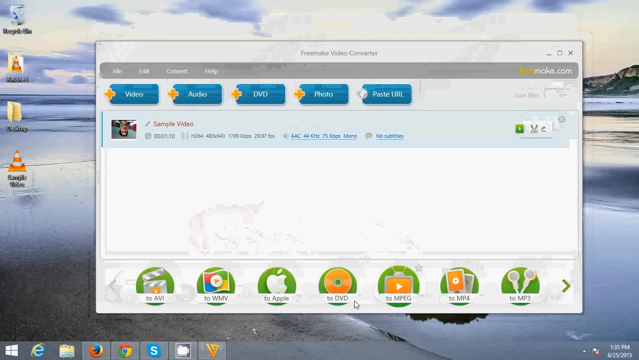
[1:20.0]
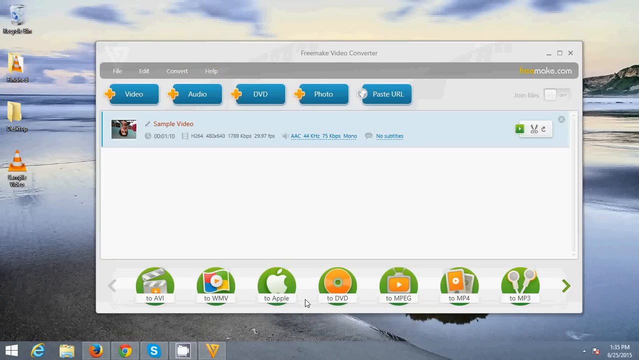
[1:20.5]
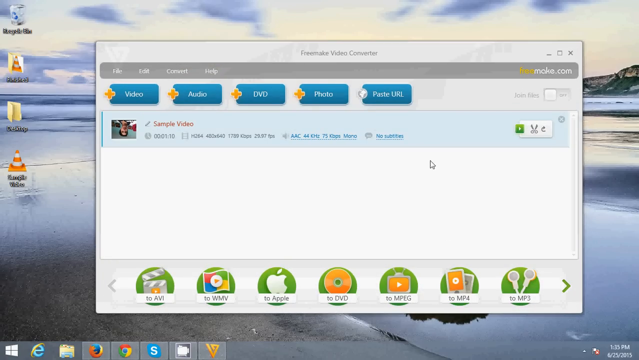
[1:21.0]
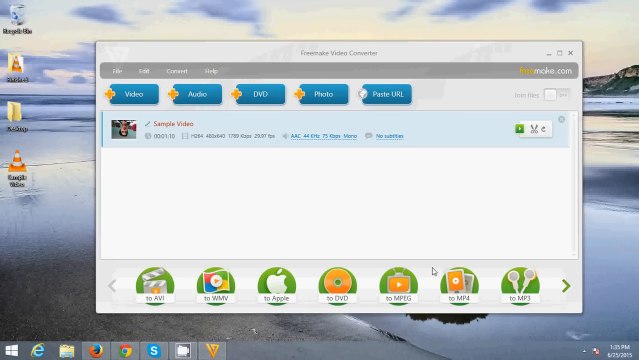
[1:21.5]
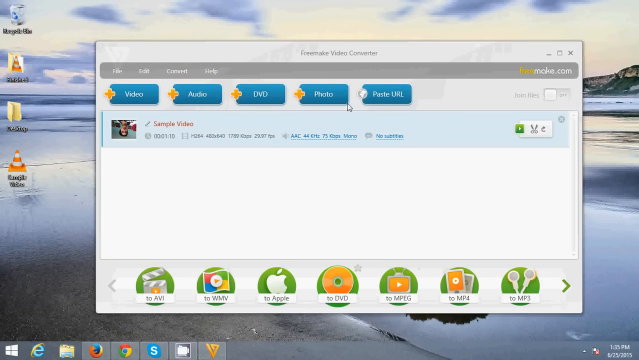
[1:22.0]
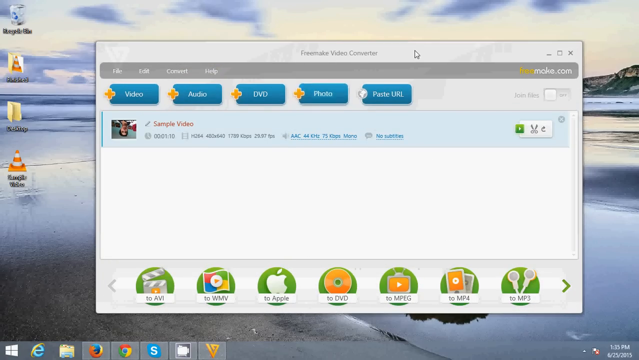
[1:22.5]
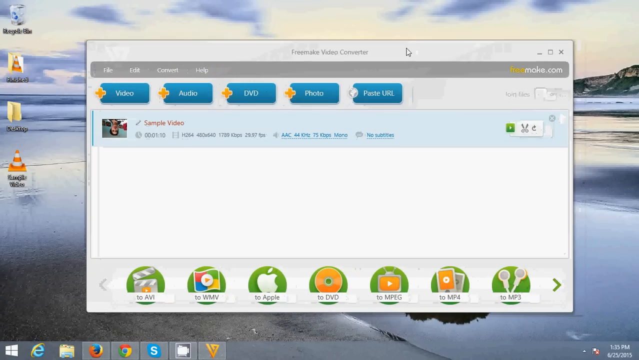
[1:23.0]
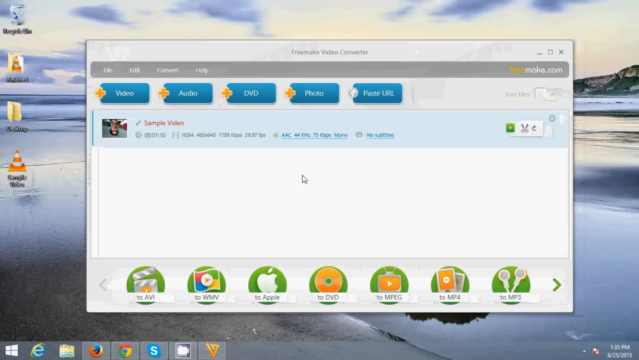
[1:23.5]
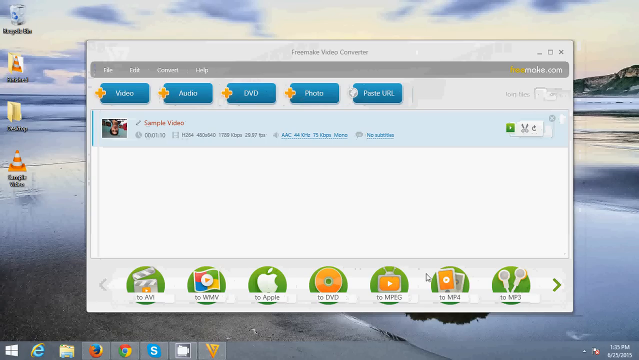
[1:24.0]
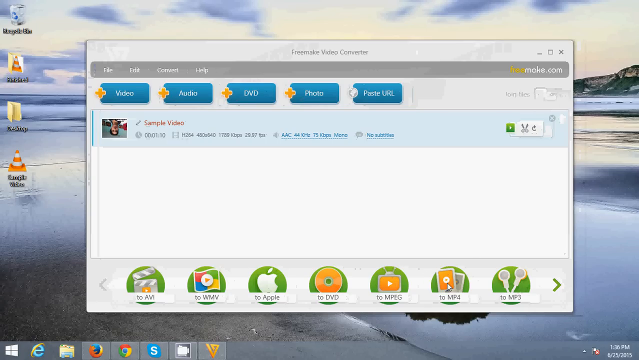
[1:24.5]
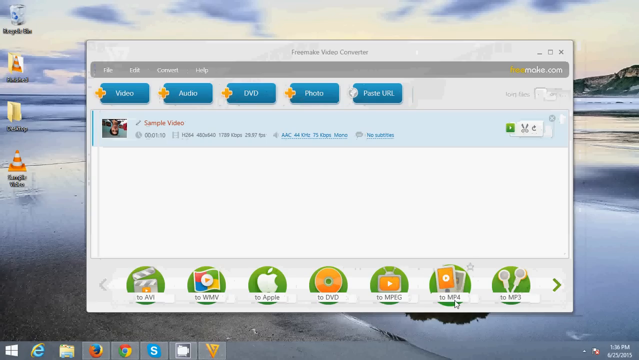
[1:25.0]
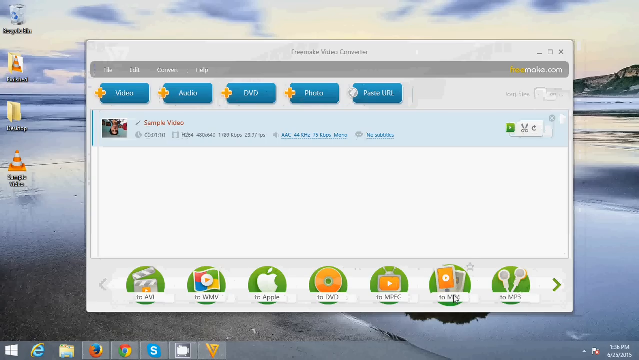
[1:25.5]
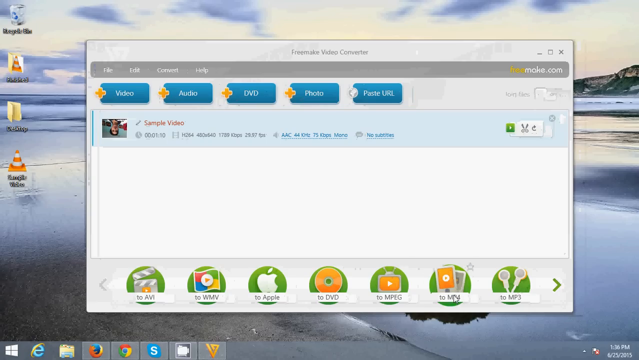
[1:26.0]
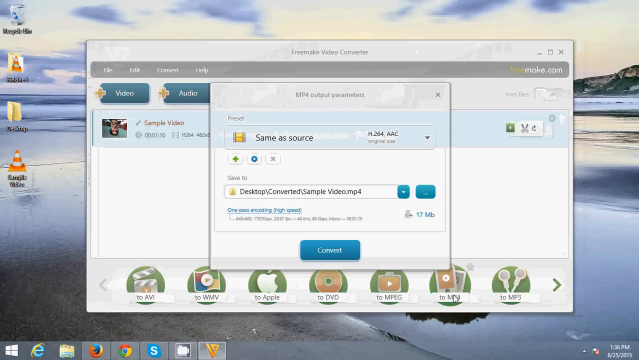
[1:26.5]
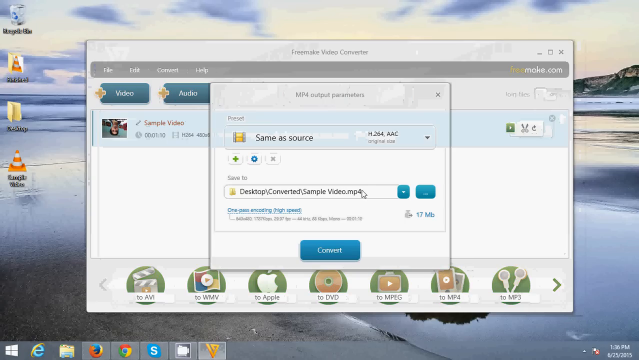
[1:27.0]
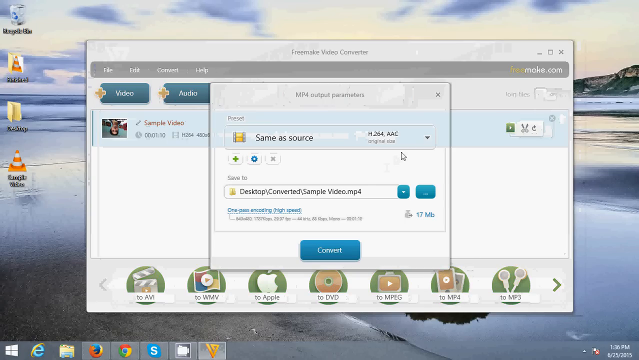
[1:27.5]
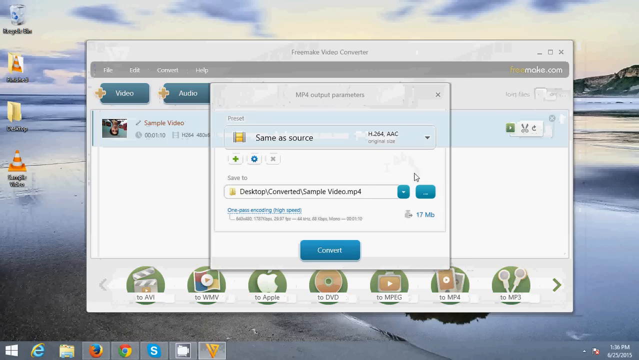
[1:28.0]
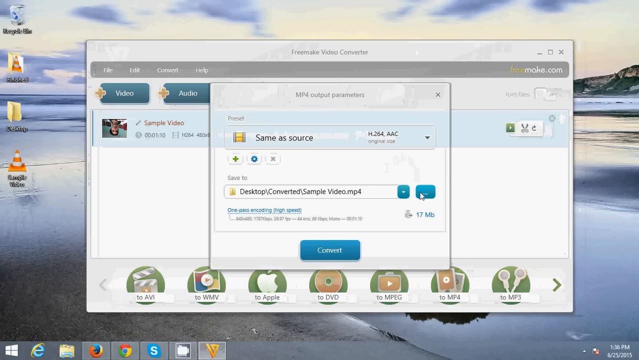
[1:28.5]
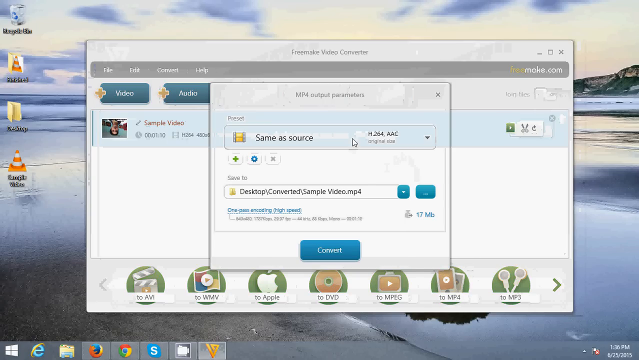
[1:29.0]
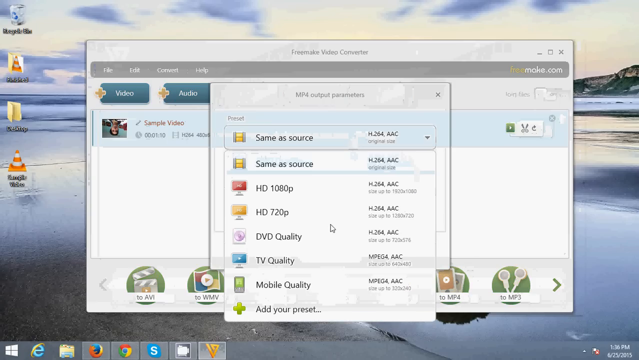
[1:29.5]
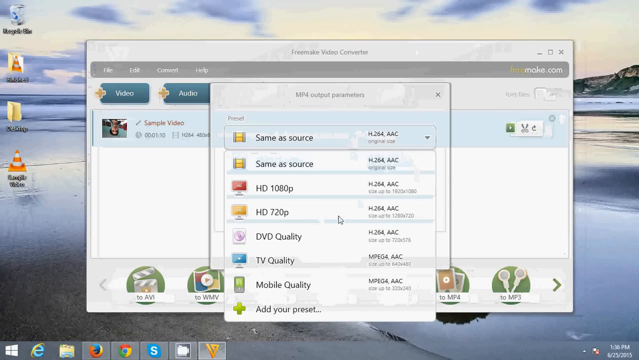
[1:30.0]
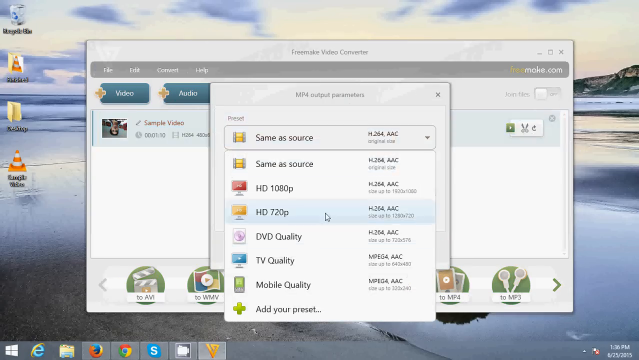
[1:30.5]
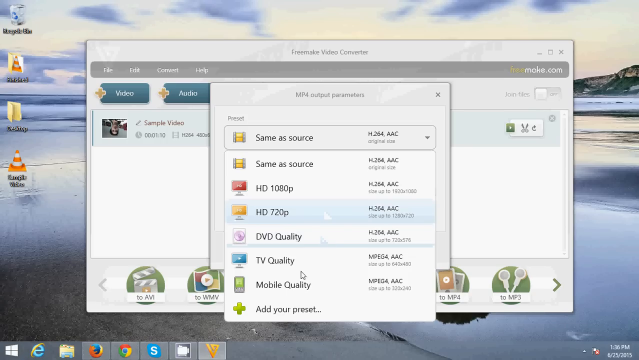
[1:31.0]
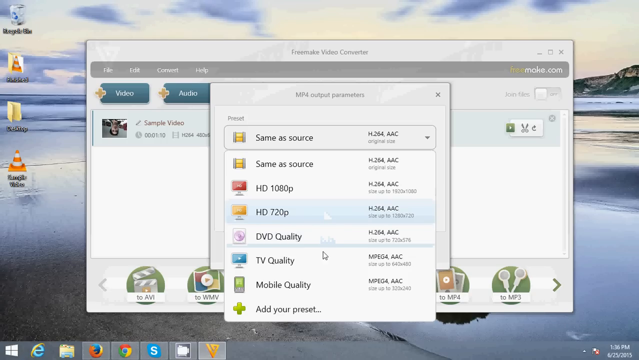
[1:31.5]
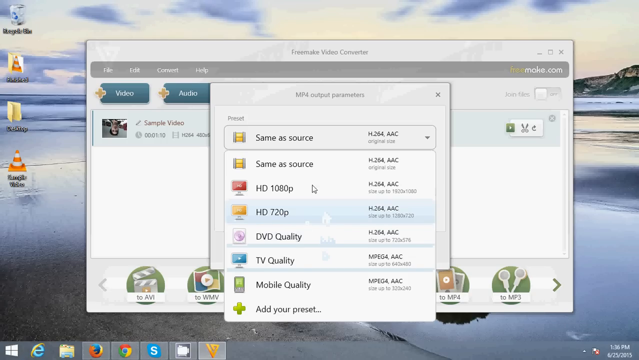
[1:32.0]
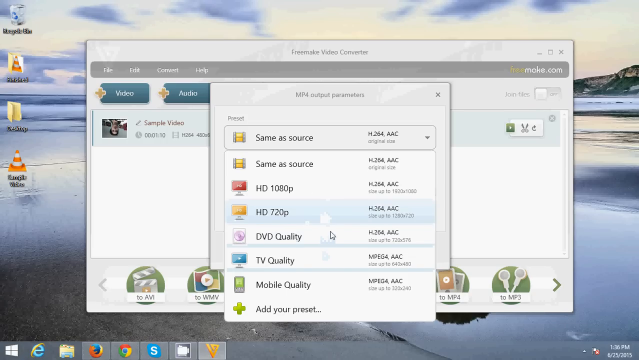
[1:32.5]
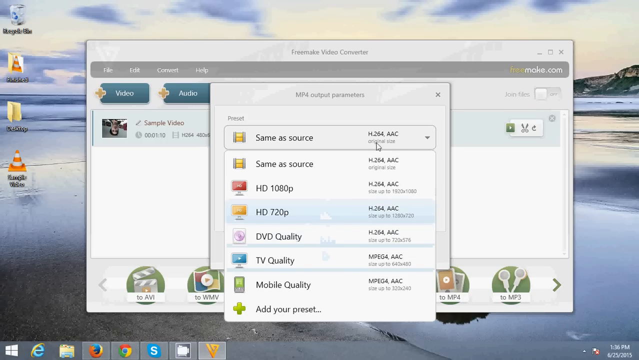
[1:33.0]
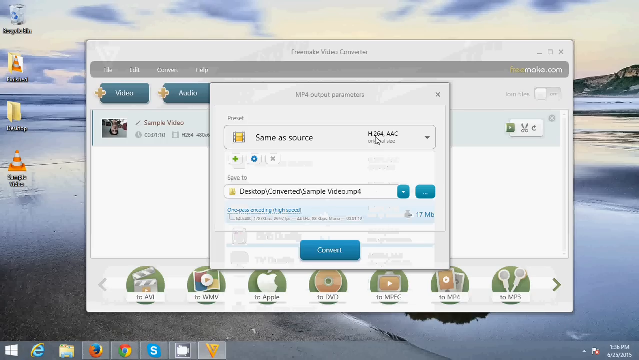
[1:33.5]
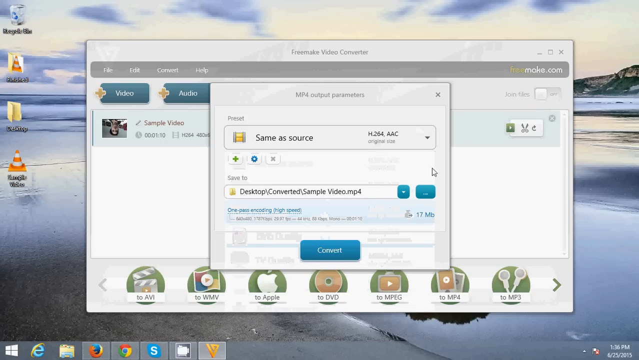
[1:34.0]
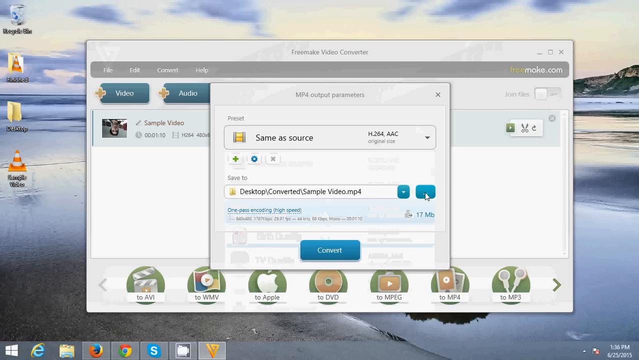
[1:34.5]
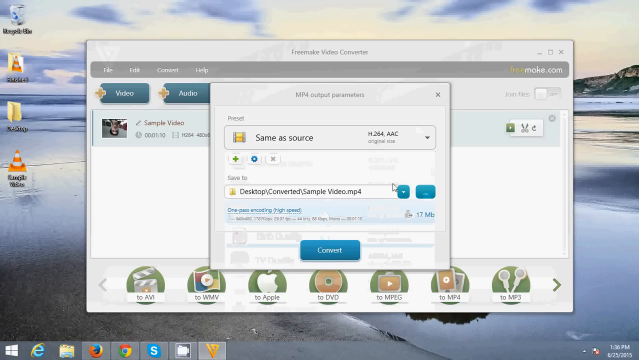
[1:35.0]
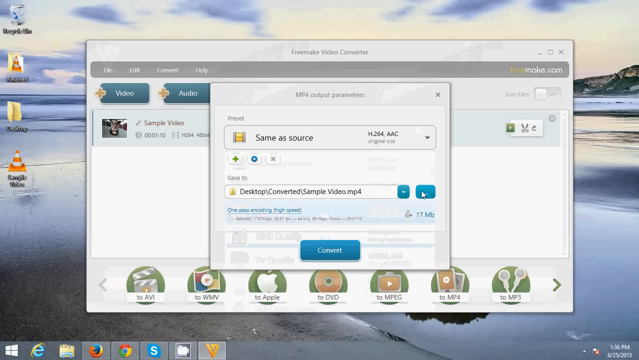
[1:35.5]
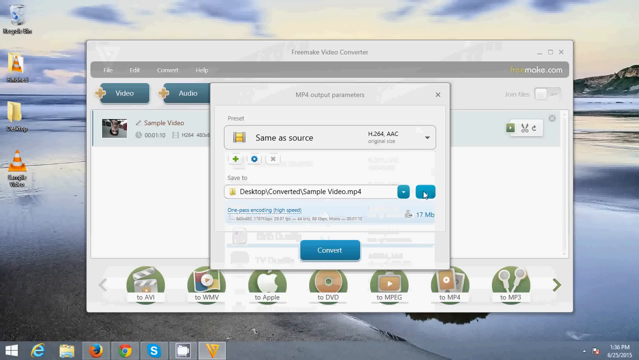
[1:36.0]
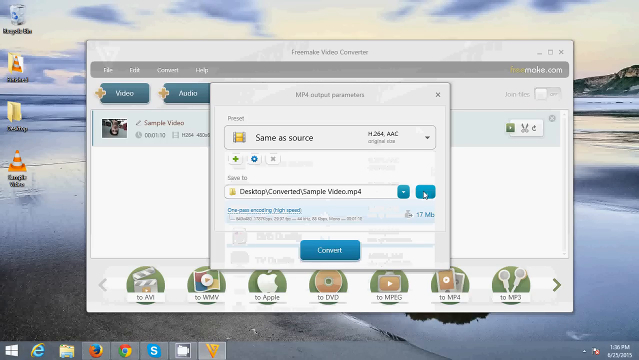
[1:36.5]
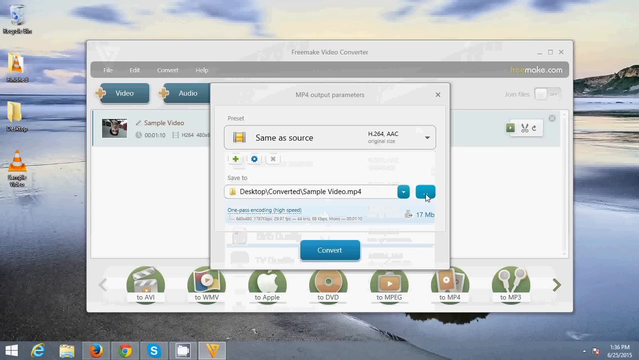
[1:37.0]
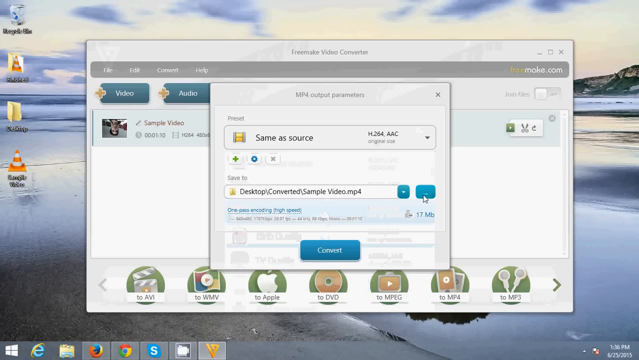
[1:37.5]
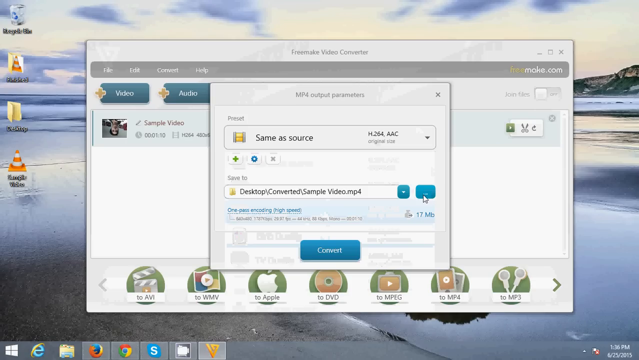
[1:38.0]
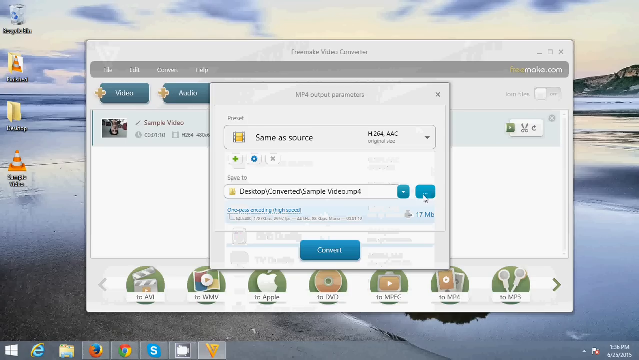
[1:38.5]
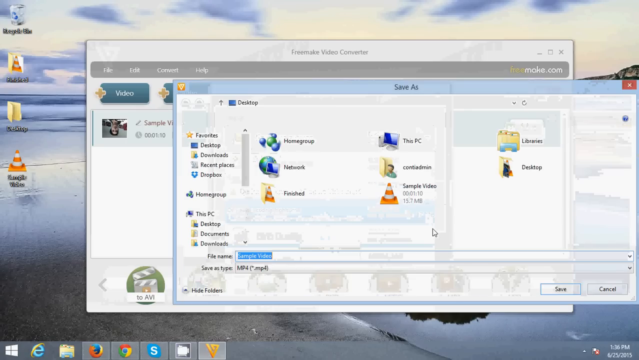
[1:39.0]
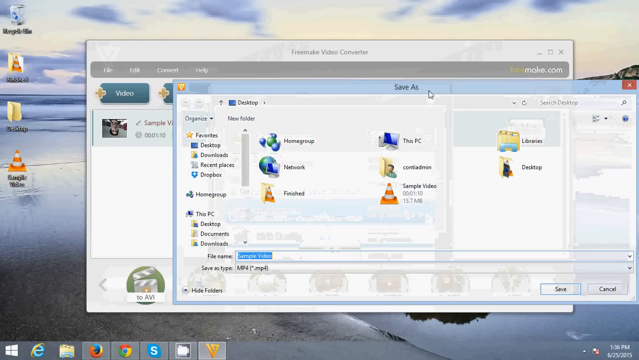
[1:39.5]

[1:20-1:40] The mouse cursor moves quite erratically across the screen. Eventually the box is moved slightly and an icon at the bottom is clicked; it says "2MP4" and shows what looks like an old-style iPod in a green circle. This opens another box titled "MP4 output parameters", showing where the file will be saved; the save-to location currently reads "desktop/converted/sample video MP4". The cursor moves around a little as if hesitant, then clicks "same as source" under the preset, and the options essentially keep the video the same as the original. It then clicks the blue box next to the save location to bring up the save location window.